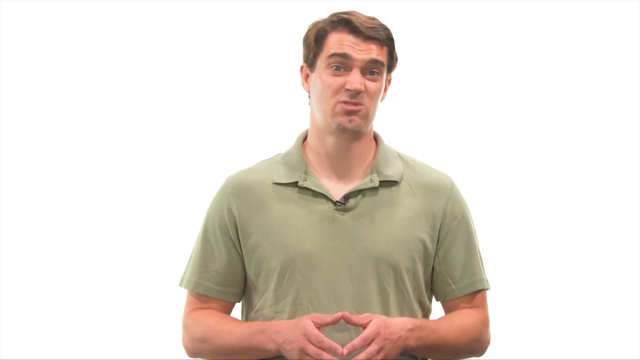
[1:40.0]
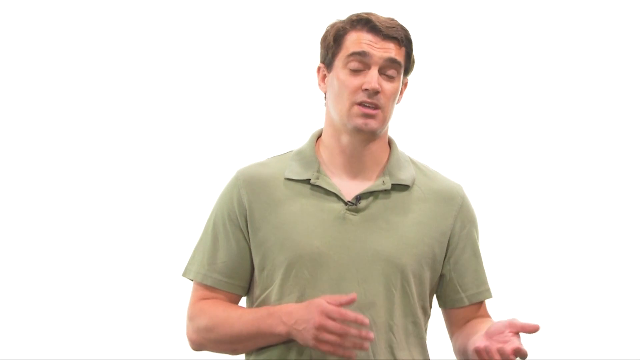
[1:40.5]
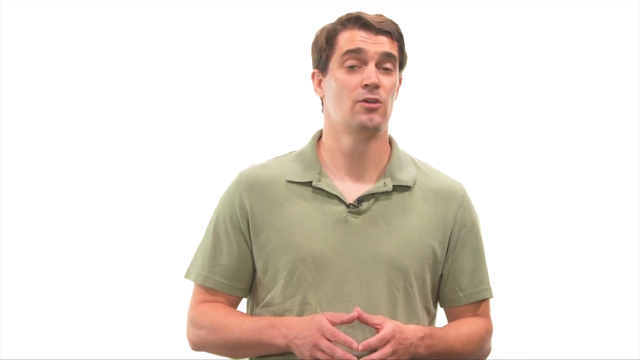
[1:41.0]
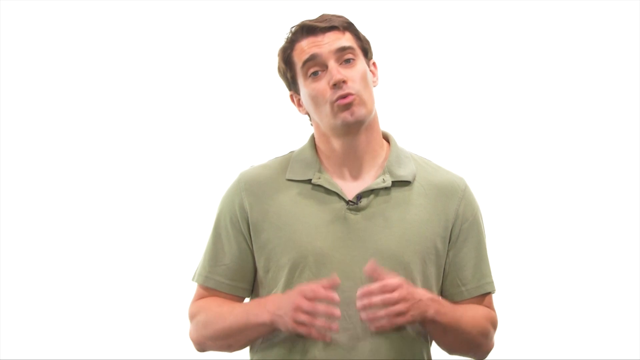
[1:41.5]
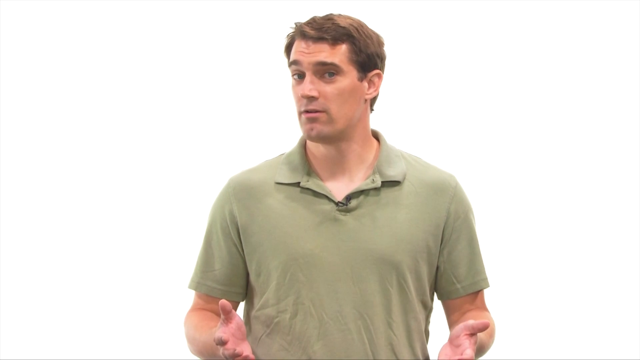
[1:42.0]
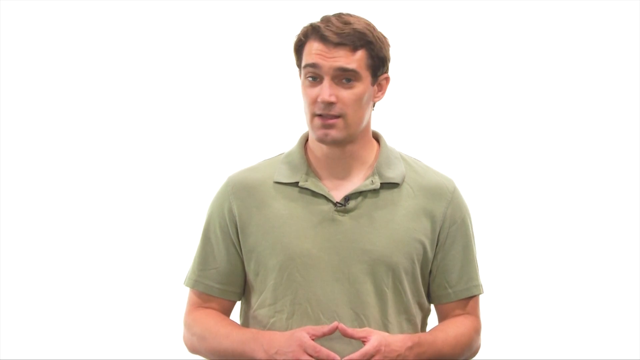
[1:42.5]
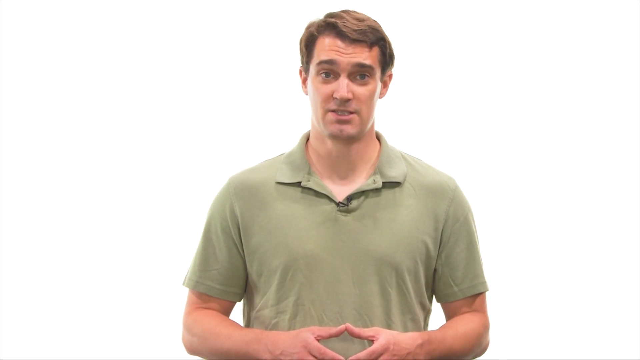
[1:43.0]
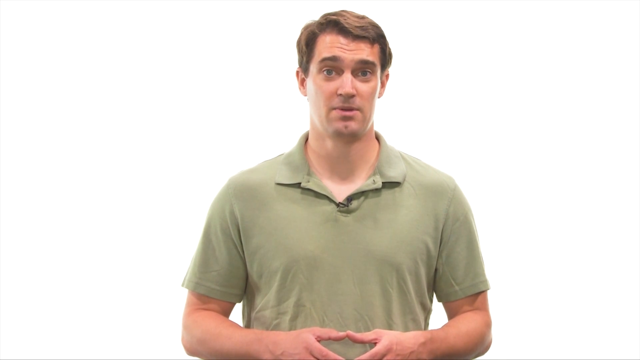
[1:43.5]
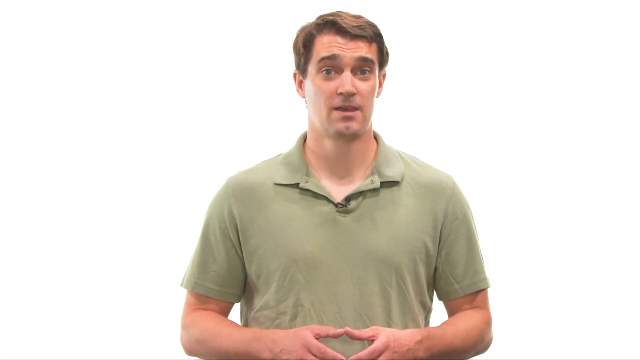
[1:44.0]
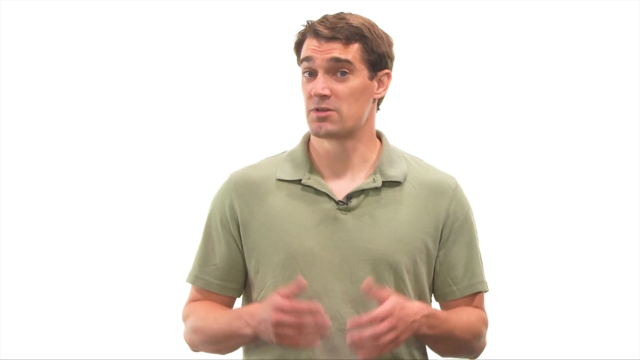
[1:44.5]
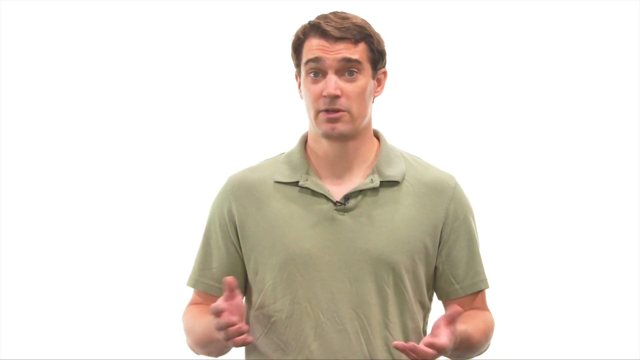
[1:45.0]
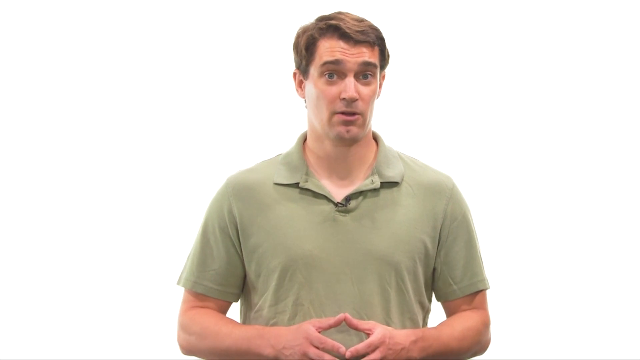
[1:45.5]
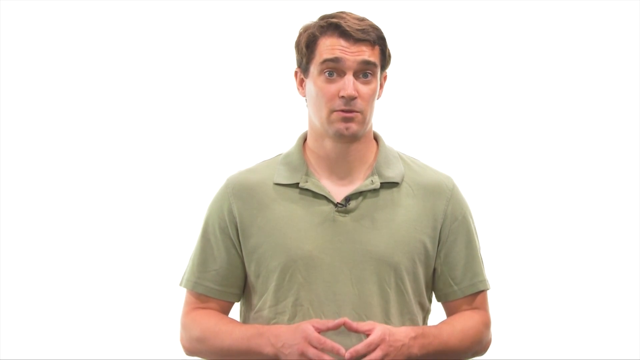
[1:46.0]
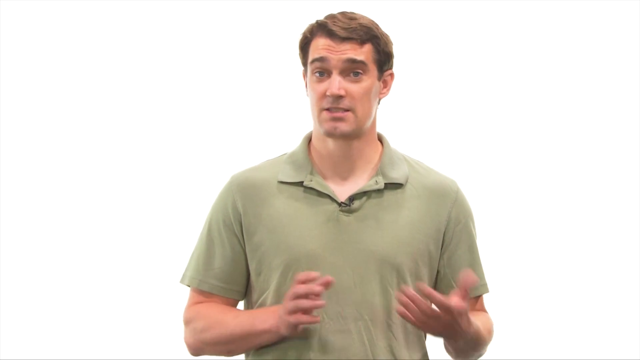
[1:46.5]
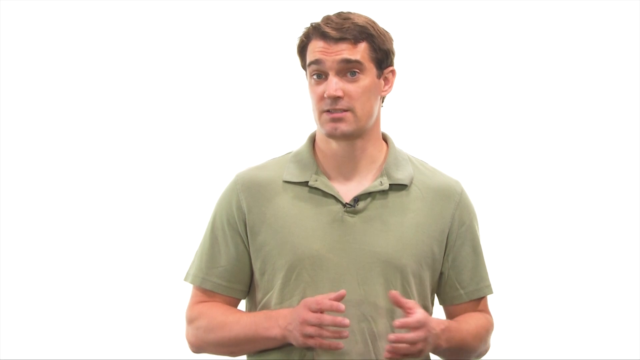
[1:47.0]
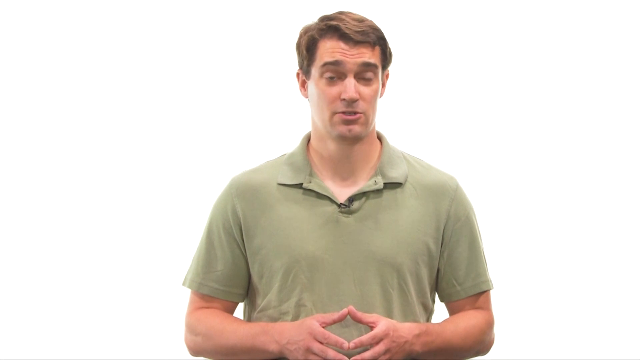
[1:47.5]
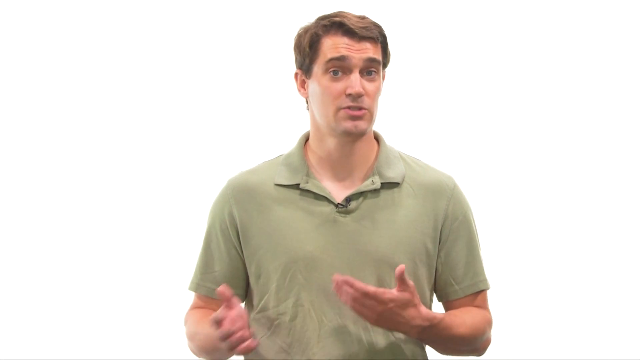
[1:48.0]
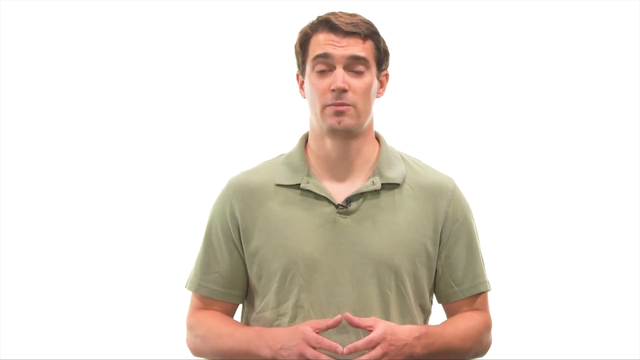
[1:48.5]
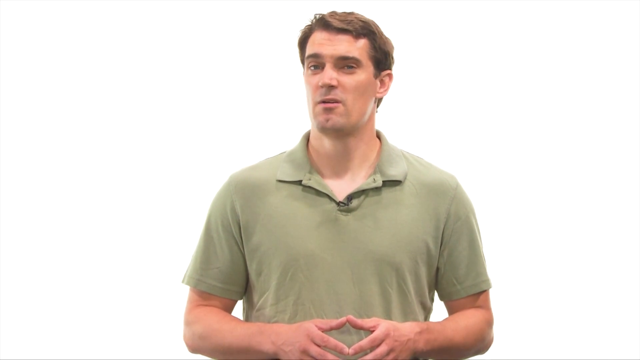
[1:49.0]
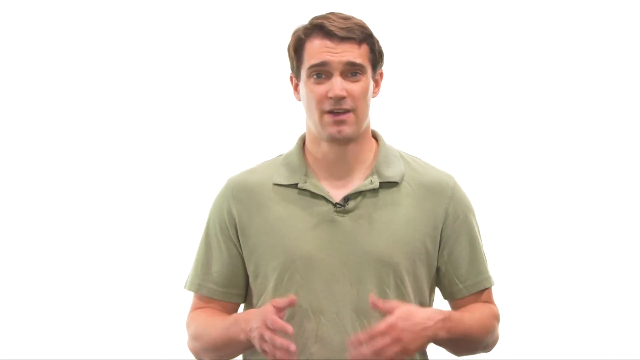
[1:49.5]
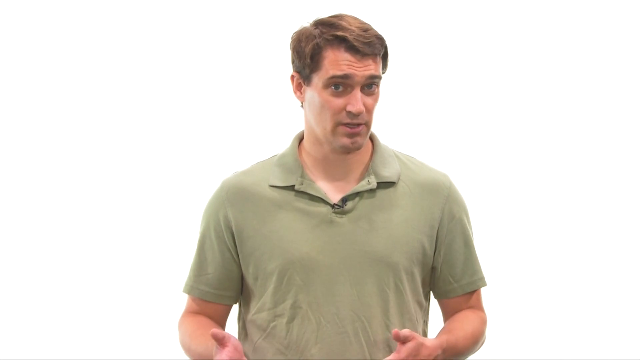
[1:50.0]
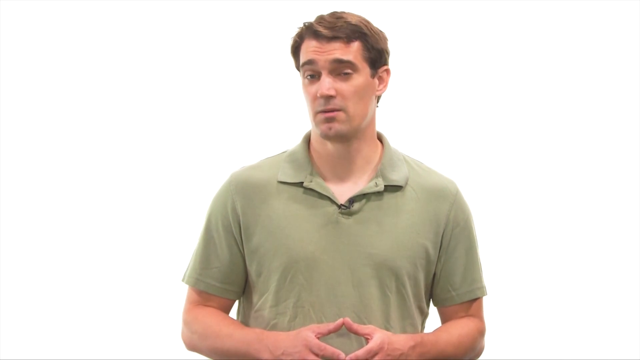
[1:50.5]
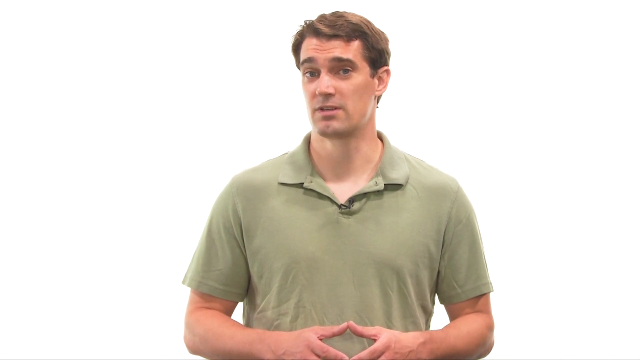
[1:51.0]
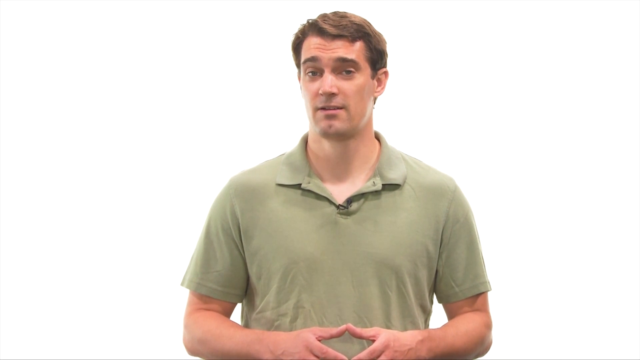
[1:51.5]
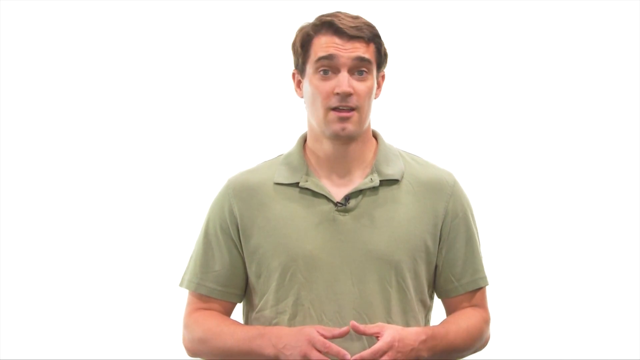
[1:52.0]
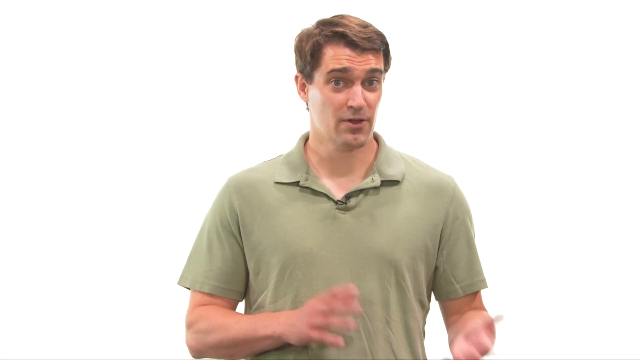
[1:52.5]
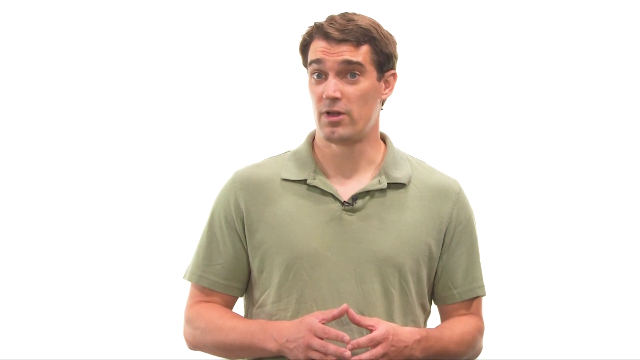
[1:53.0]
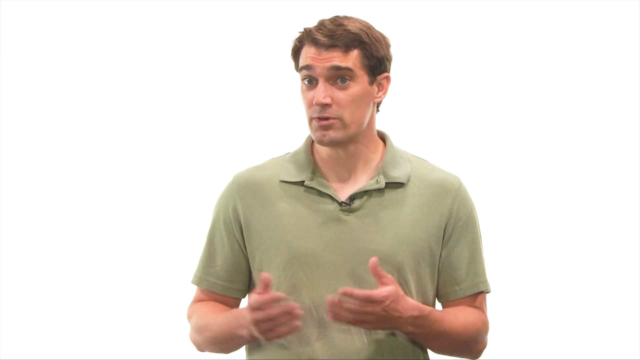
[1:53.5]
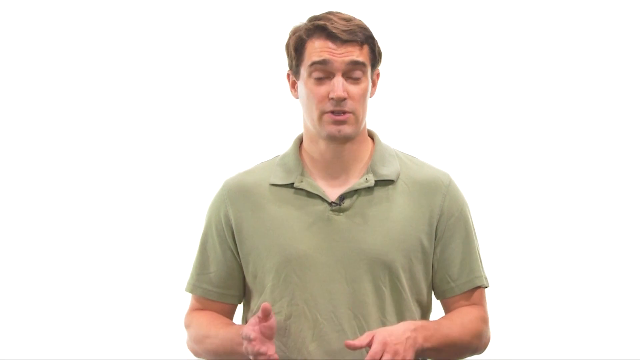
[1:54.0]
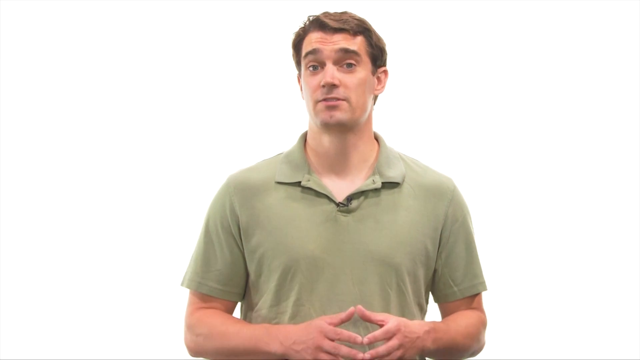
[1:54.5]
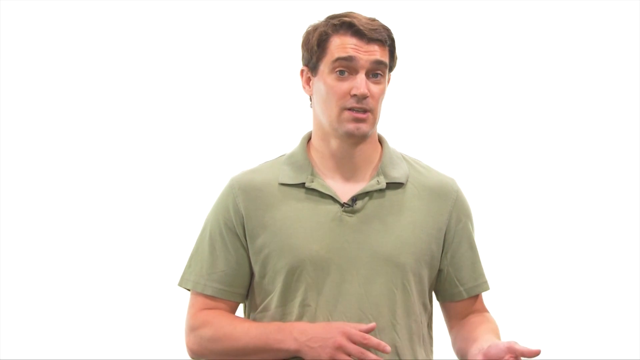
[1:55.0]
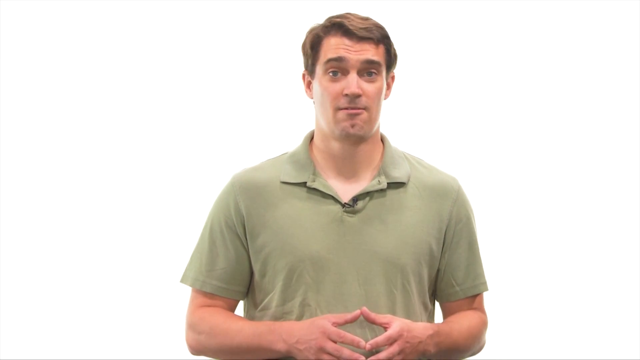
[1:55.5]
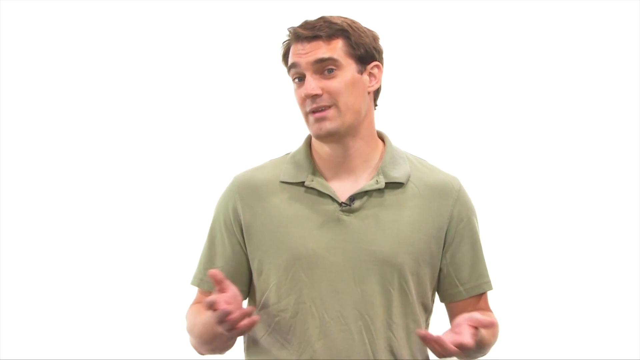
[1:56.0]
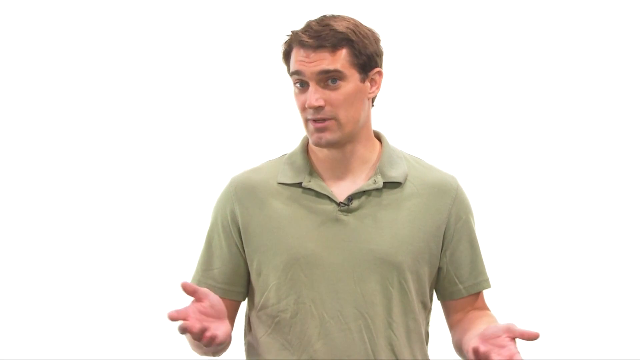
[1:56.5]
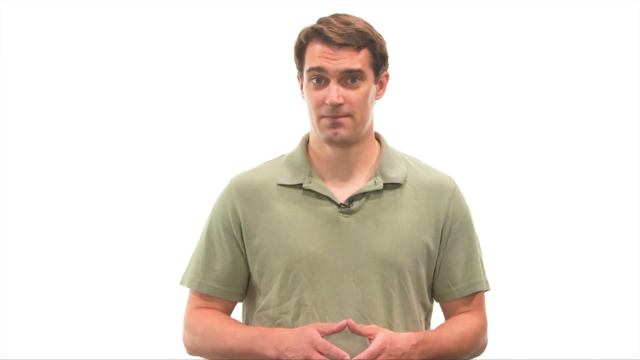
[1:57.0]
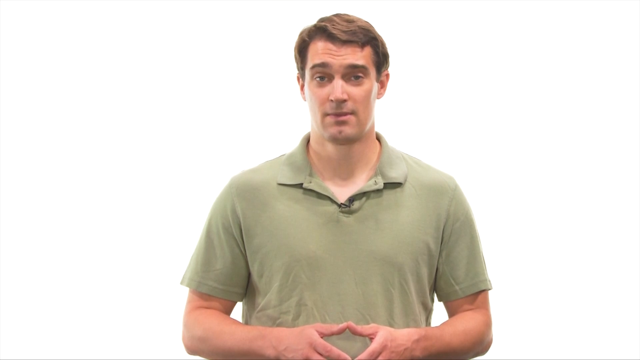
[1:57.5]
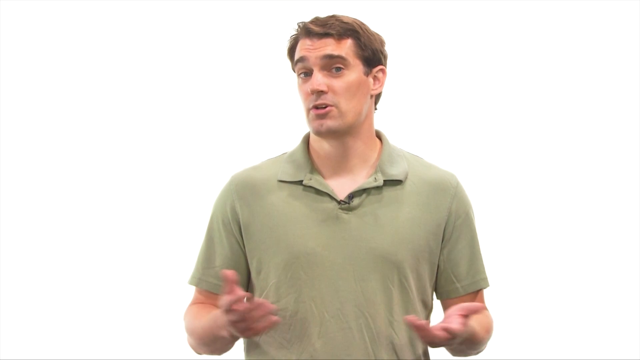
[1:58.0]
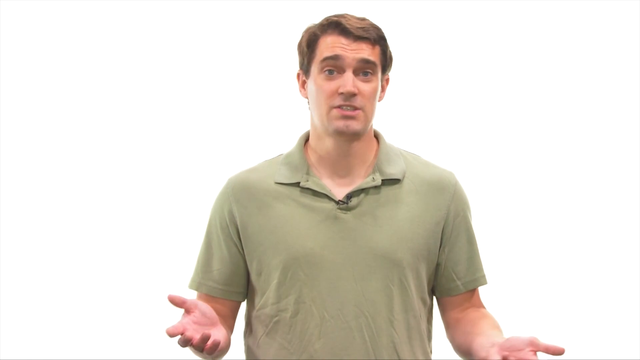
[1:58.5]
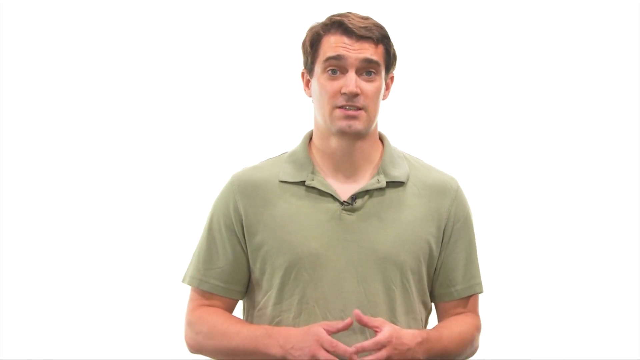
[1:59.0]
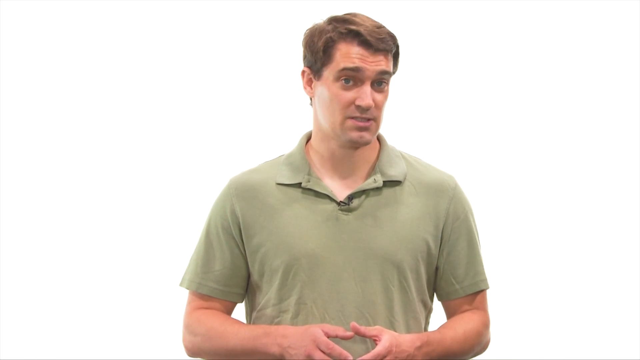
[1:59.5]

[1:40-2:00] The man continues speaking to the camera. His hands start out resting on each other, then his left hand moves to the left for a split second and back to the middle. He raises both hands slightly and lowers them again. He connects his hands in a diamond shape as he talks, then lifts his left hand out while his right hand stays closer to him. He returns his hands to the diamond shape, brings them out, and puts them back into that position once more. He then puts both hands out and moves them around a little while talking. His head turns and moves a little as he speaks. Near the end he keeps bringing his hands outward and back in toward his body. His head makes big movements; it turns to an angle showing his left cheek, then he turns back and speaks straight to the camera. He makes slight nodding movements throughout.